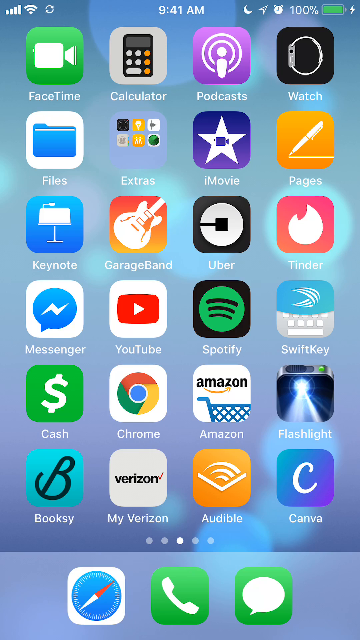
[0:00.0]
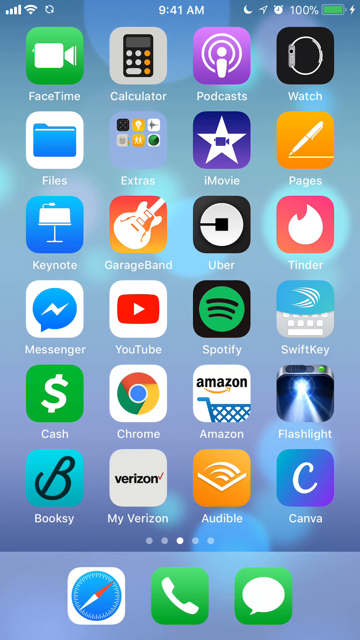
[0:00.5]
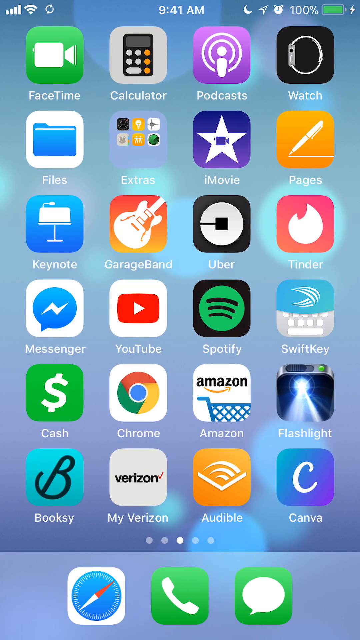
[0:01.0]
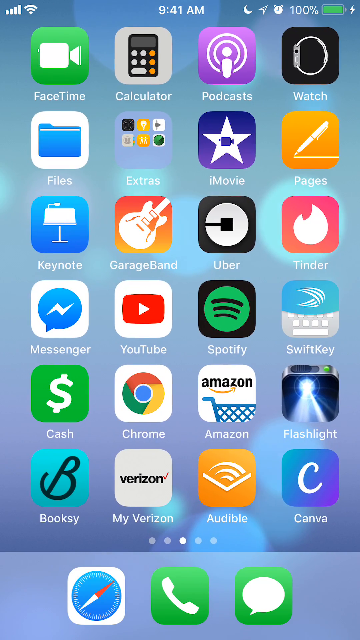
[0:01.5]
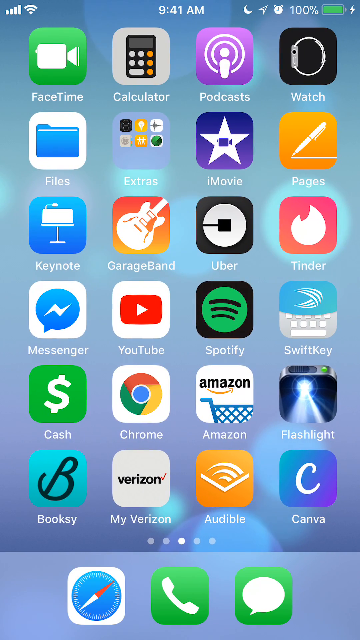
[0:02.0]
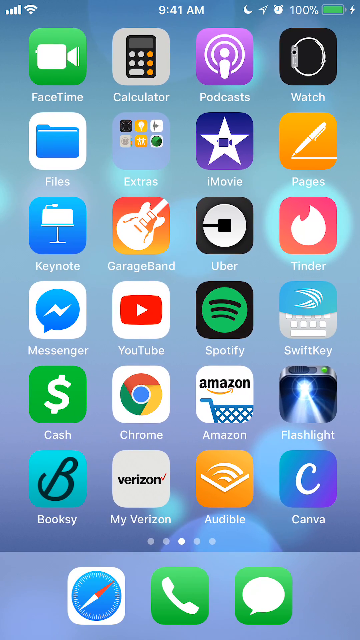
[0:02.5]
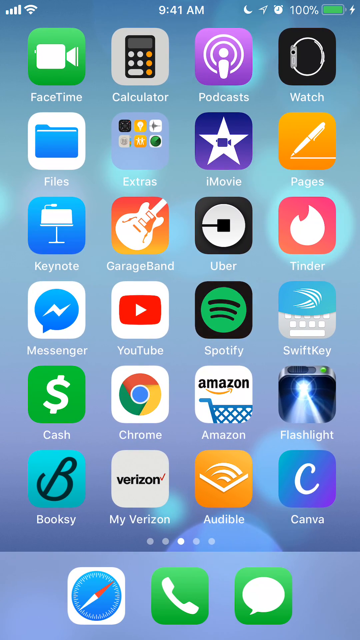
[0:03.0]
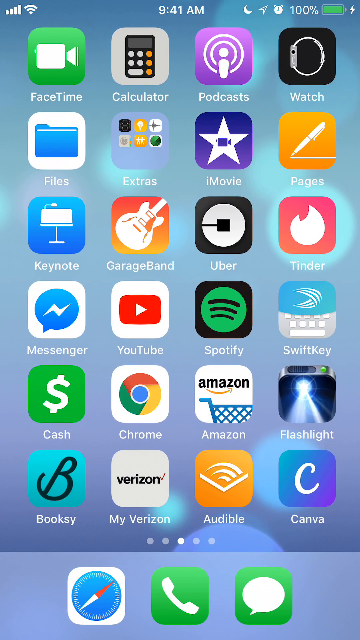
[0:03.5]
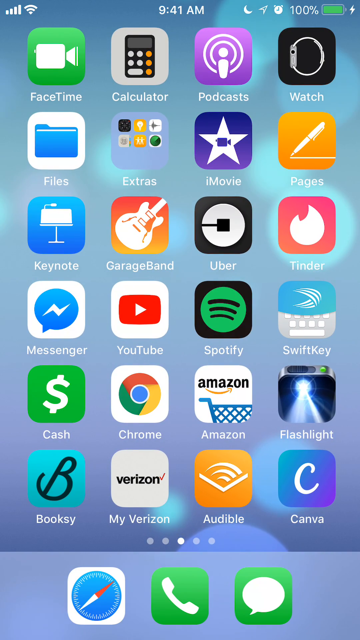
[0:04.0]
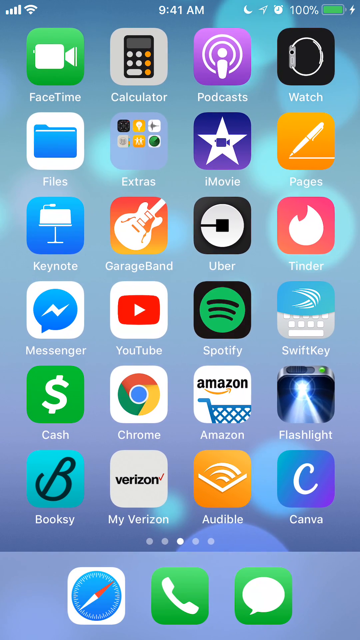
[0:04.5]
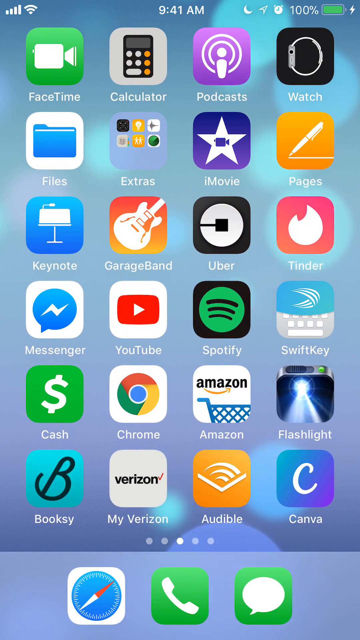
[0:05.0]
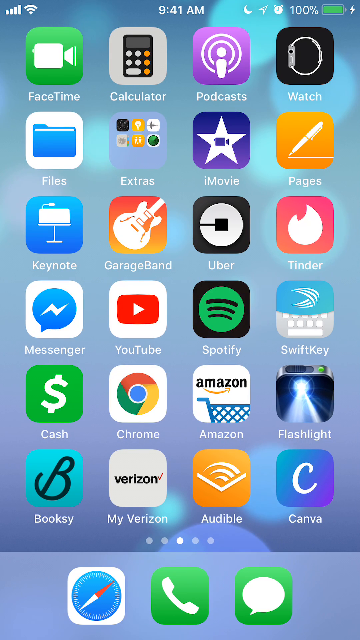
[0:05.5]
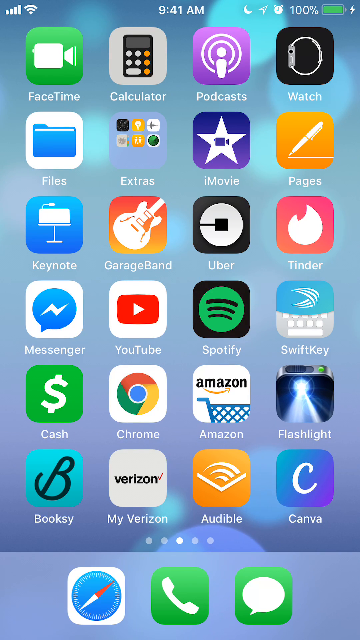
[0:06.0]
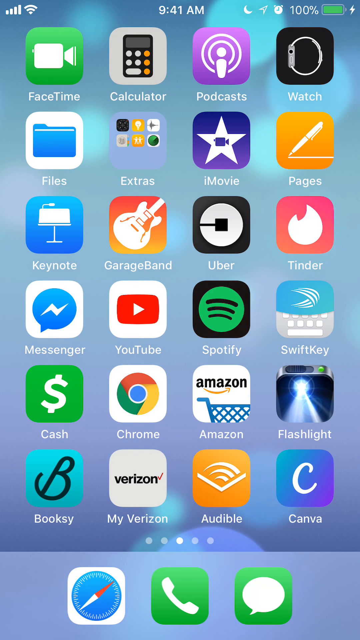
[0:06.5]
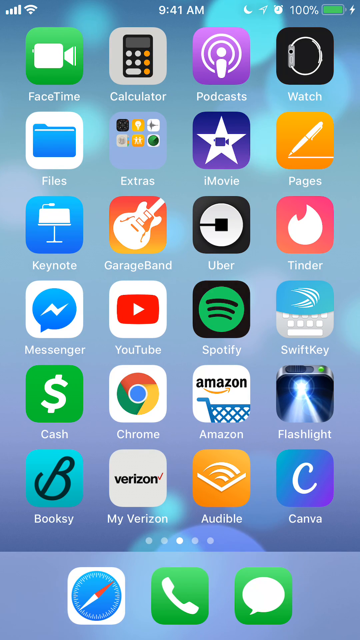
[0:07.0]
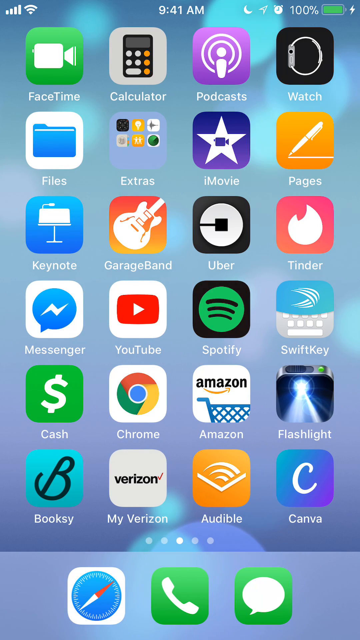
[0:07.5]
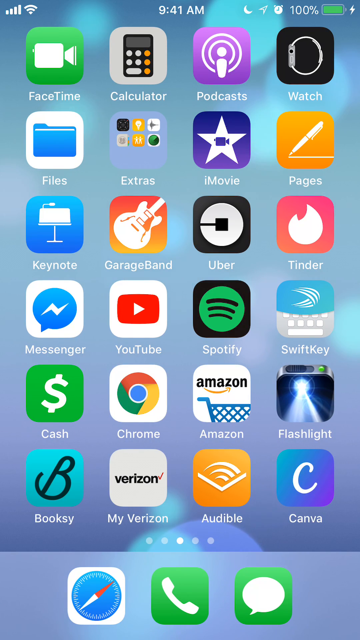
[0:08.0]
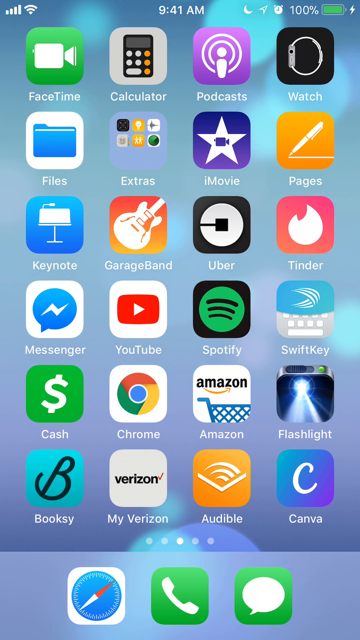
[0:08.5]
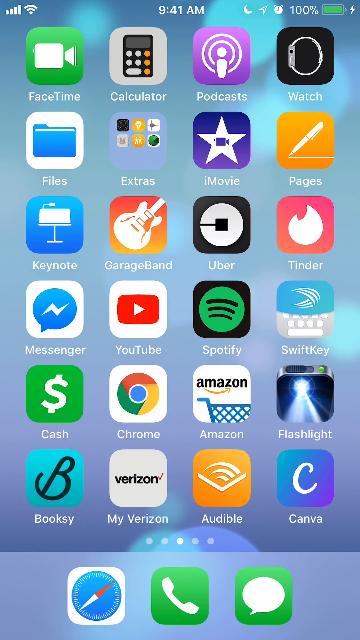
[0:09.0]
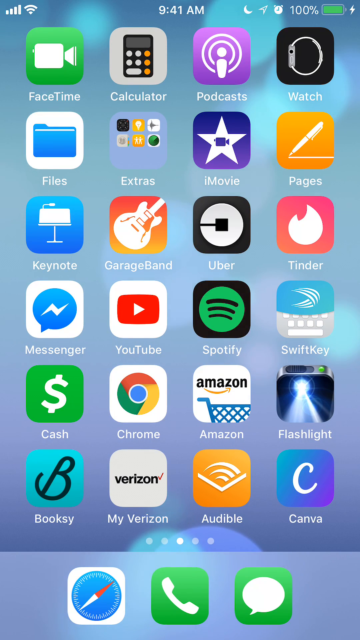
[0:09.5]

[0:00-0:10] An app grid is arranged in four rows. The top row includes FaceTime, Calculator, Podcast, Watch, and an empty space like a placeholder or a recently deleted app. The second row has Files, Extras, iMovie, Pages, and an empty space. The third row features Keynote, GarageBand, Uber, Tinder, and SwiftKey along the side, along with Messenger, YouTube, and Spotify. The last row has Cache, Chrome, Amazon, Flashlight, Oxy, MyUber, Verizon, Audible, and Canva. At the top of the screen the time reads 9.41am, a 100% indicator is shown, and there is a Wi-Fi signal indicator. The video is an iPhone screen display with a brown screen.